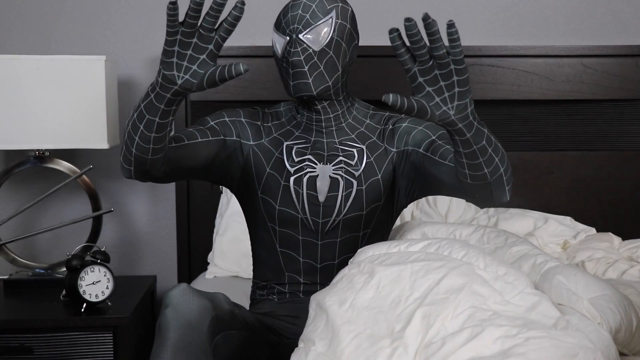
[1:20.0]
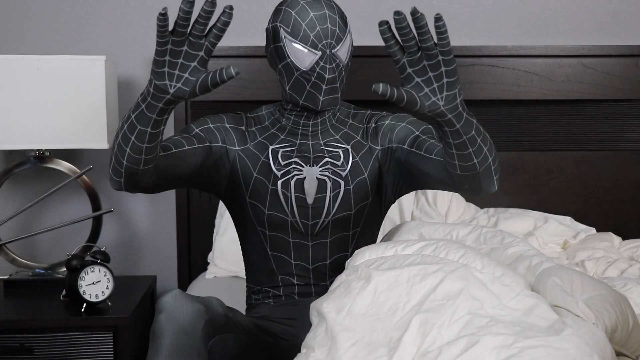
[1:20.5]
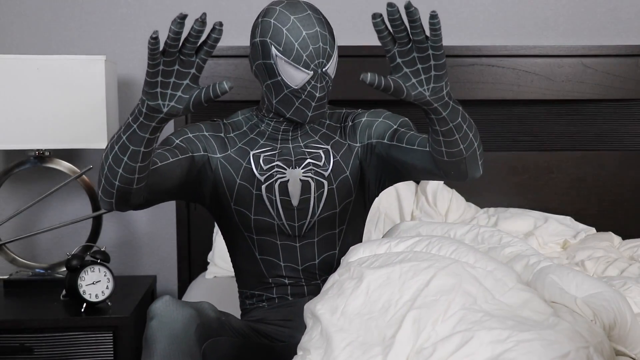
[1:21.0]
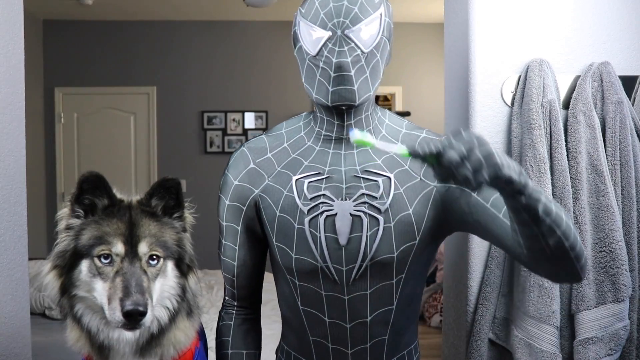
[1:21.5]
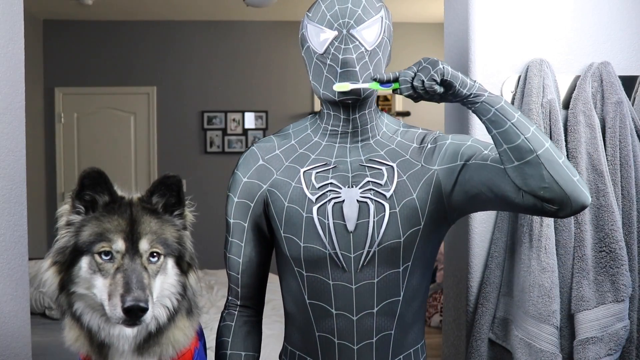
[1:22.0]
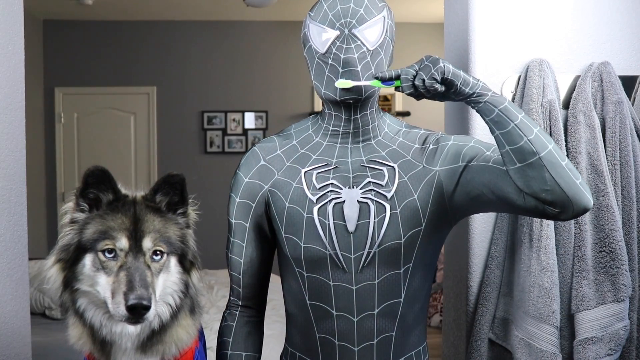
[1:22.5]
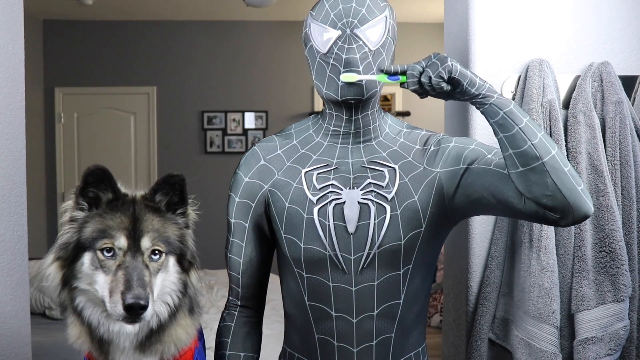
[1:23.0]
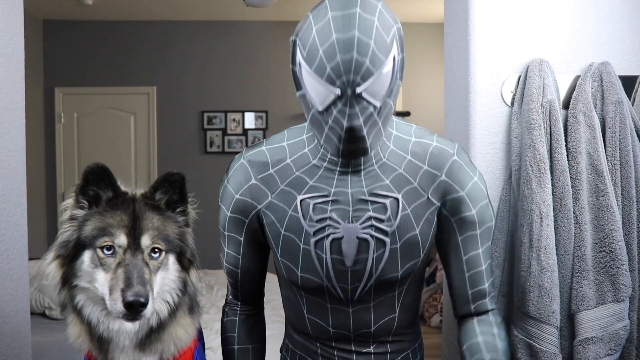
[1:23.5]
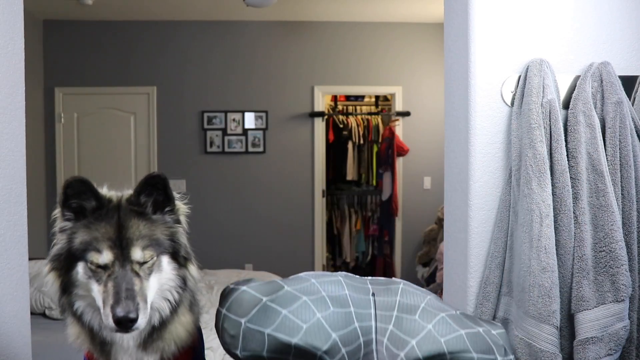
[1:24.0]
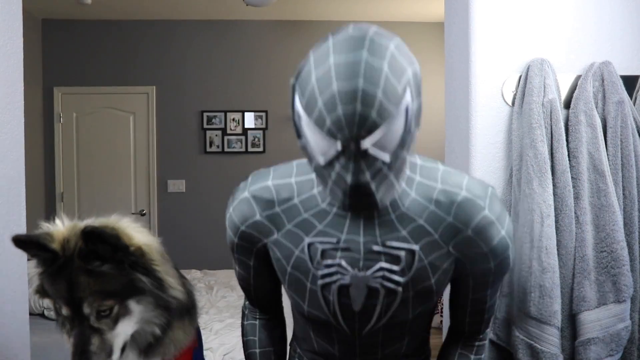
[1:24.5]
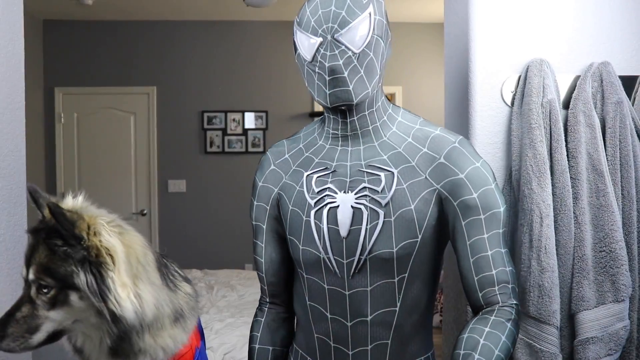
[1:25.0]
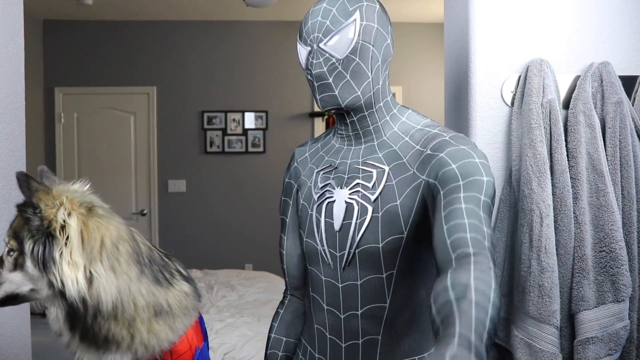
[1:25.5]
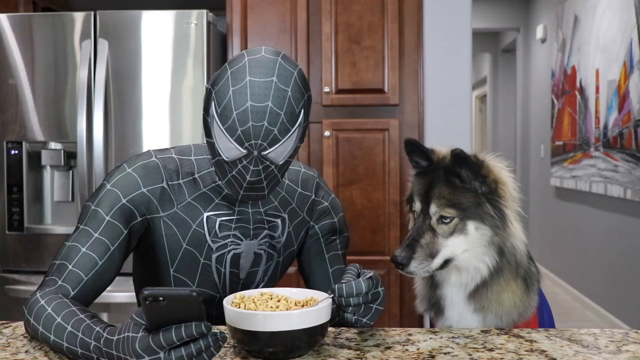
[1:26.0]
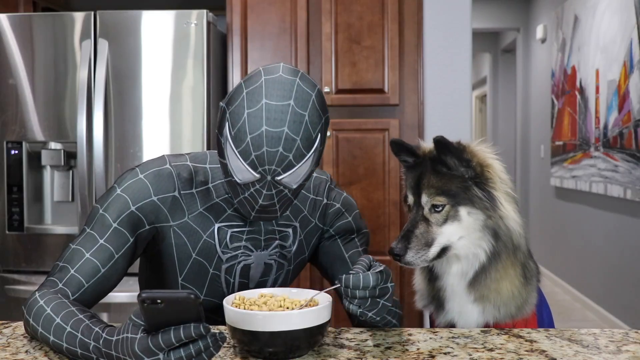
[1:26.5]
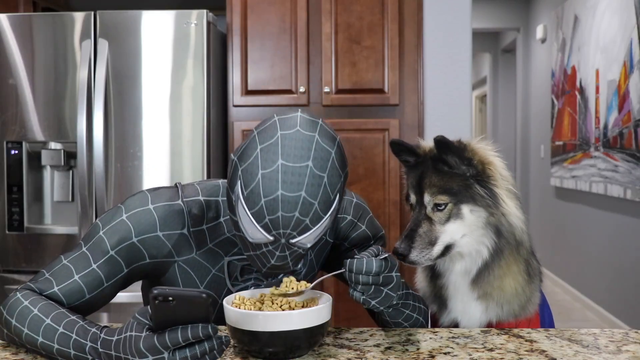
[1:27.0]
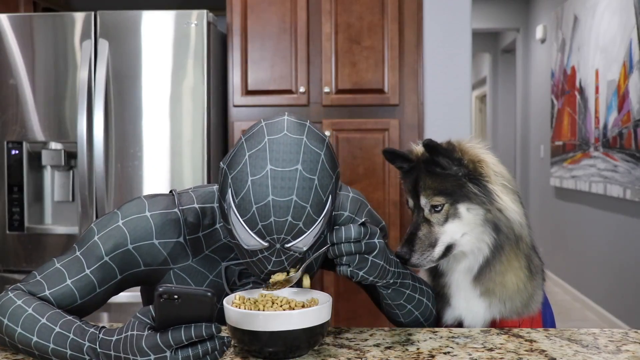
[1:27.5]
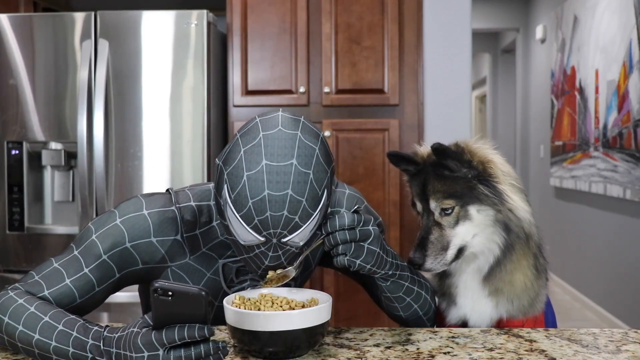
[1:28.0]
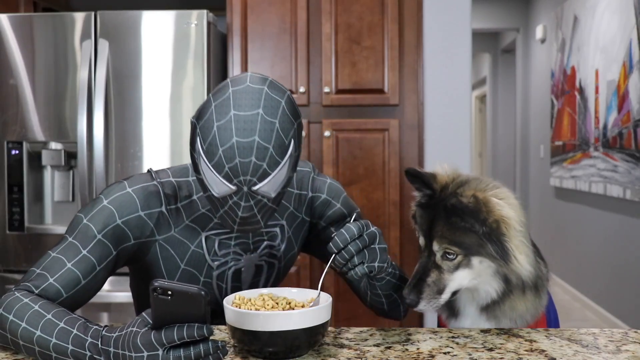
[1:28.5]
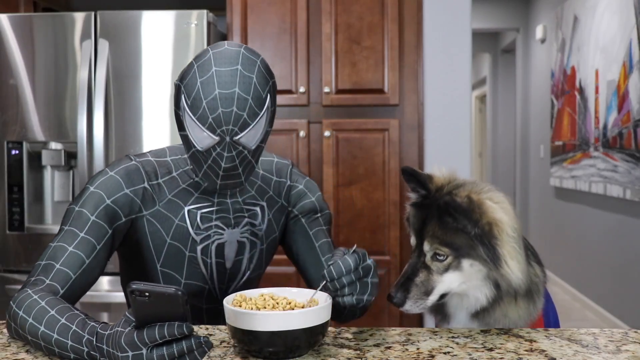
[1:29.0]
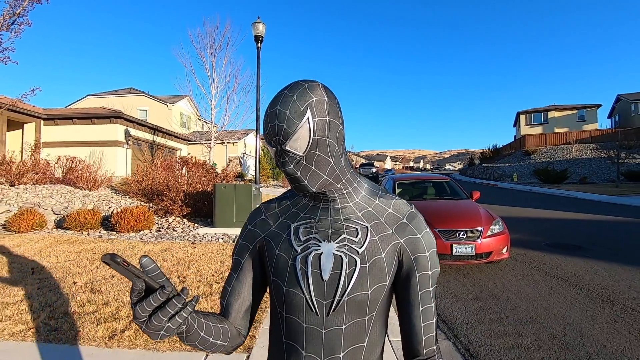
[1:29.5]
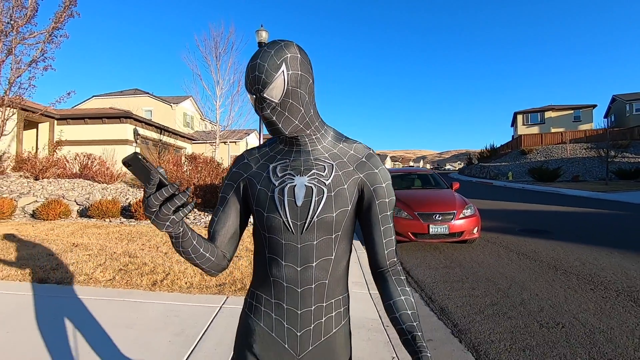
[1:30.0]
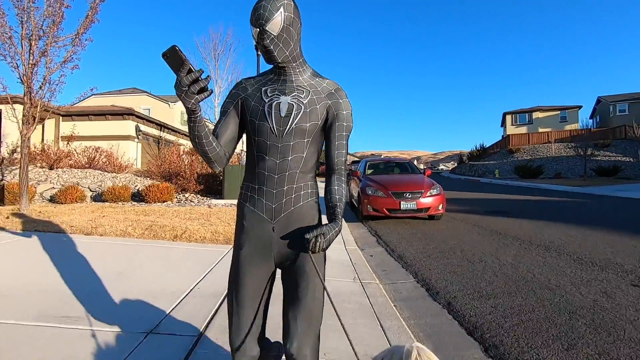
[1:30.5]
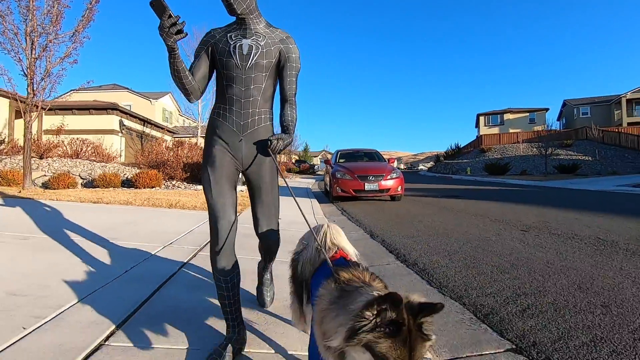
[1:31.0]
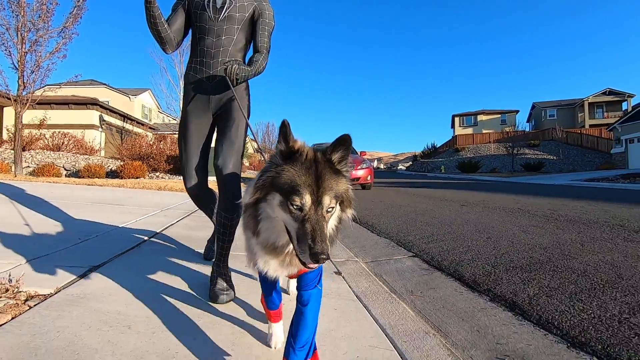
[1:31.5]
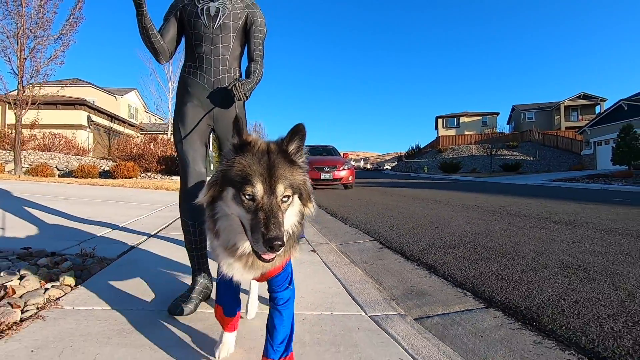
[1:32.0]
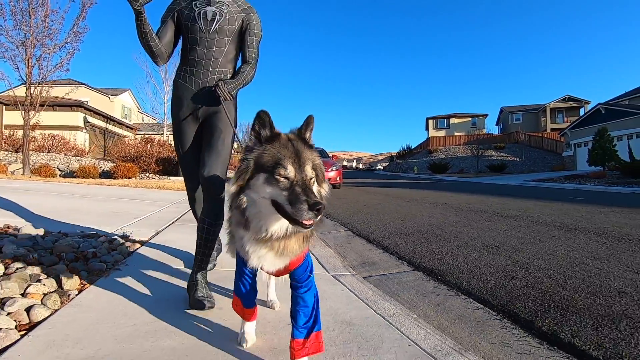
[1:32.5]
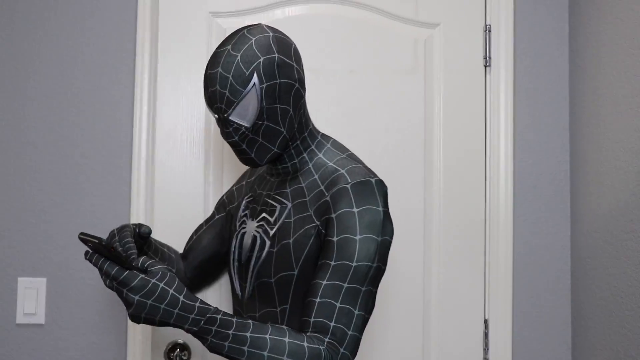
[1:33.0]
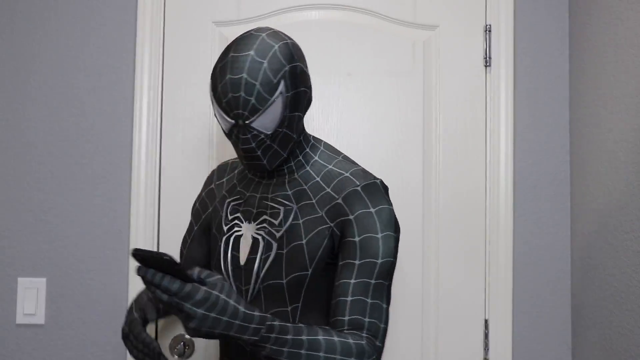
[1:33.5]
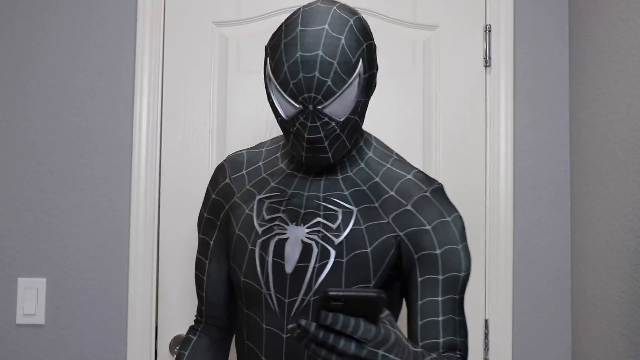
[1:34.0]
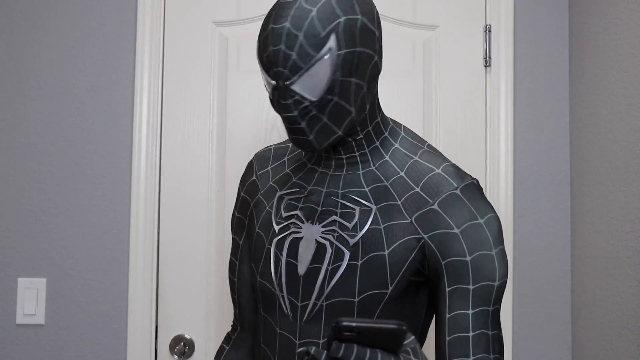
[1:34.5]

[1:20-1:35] Again titled "The Life of Spider-Dog," the video shows Spider-Man getting out of bed with his dog. This time he wears a dark black or gray Spider-Man outfit that covers his entire body and face, while the dog wears the red and blue Spider-Dog outfit. After getting out of bed, Spider-Man looks at his hands in the costume, then brushes his teeth but does not brush the dog's teeth. In the kitchen he sits down at the counter and eats cereal, this time without feeding the dog, which watches him lift the spoon. Outside, still in the black costume, he looks at his phone while walking the dog down the street; it is sunny and his shadow is visible. Coming back into the apartment, he closes the white door behind him and appears to turn on the light.